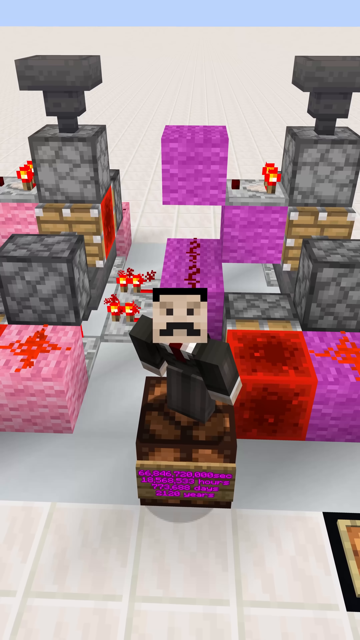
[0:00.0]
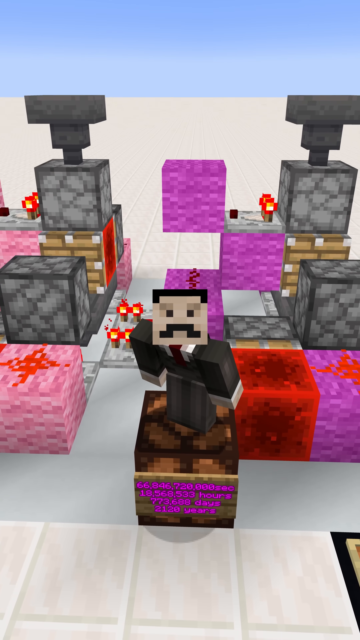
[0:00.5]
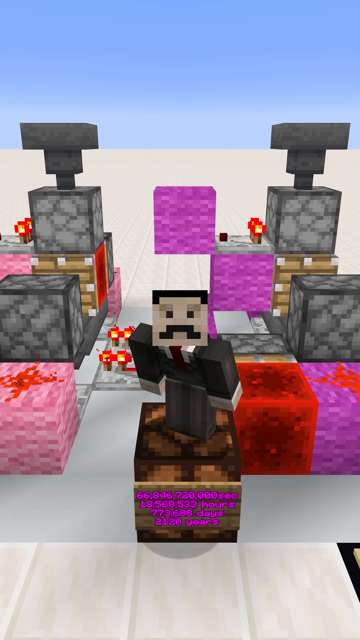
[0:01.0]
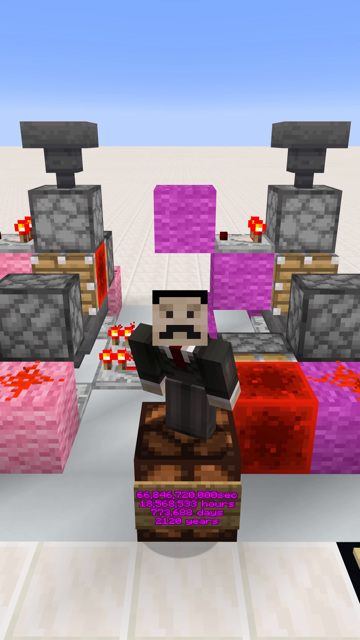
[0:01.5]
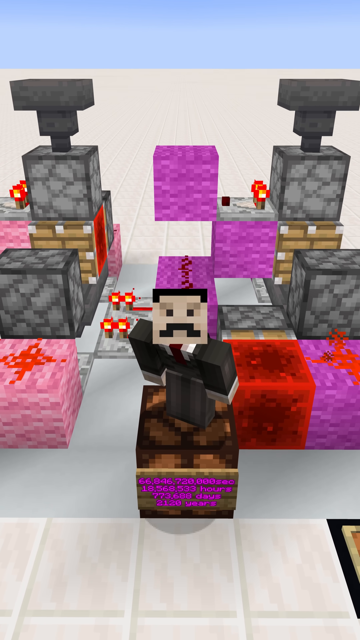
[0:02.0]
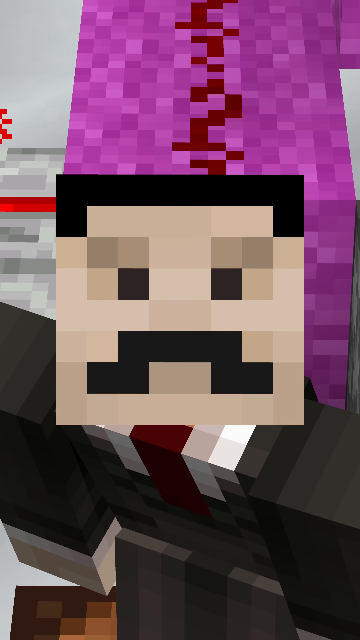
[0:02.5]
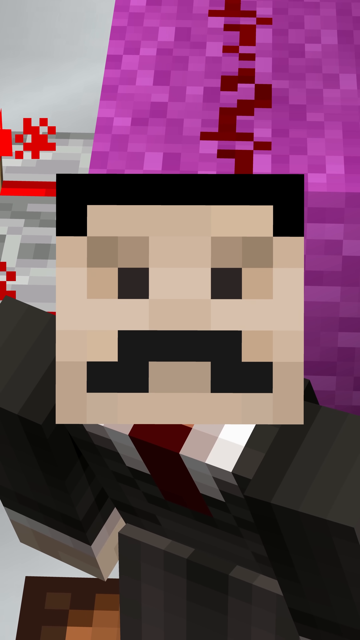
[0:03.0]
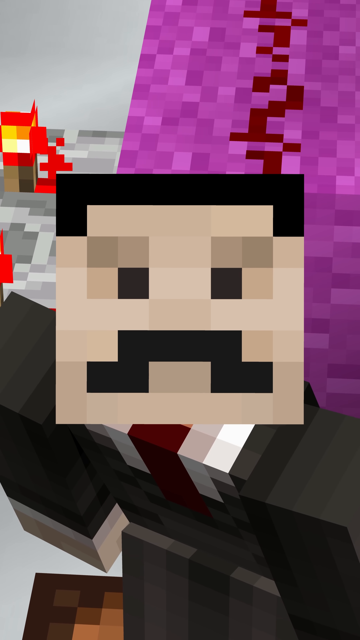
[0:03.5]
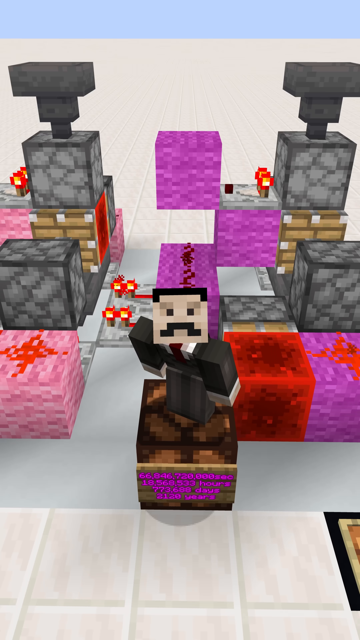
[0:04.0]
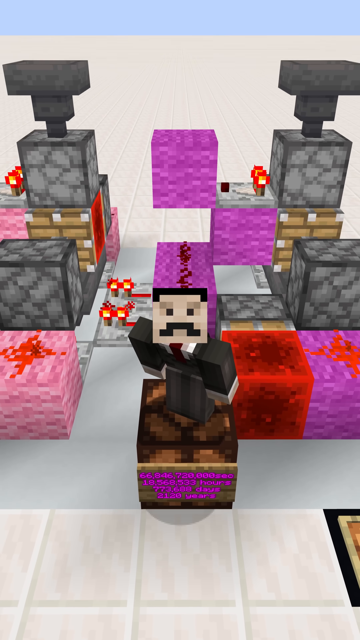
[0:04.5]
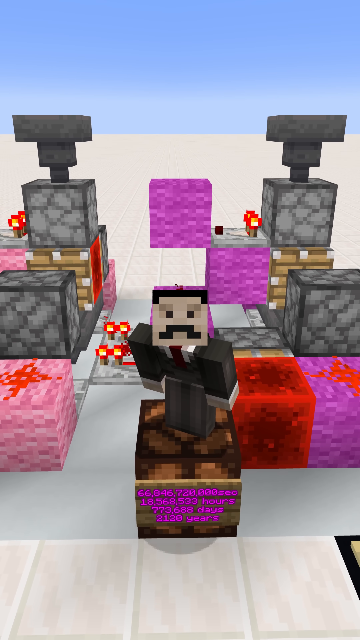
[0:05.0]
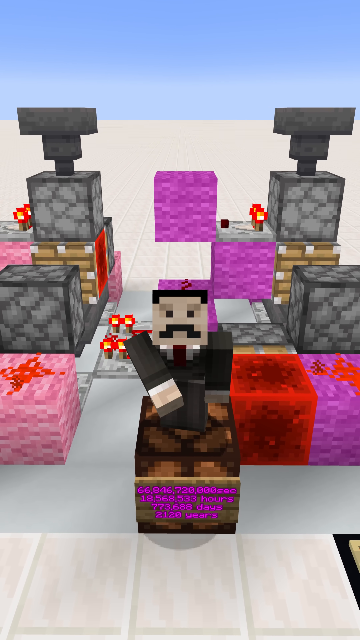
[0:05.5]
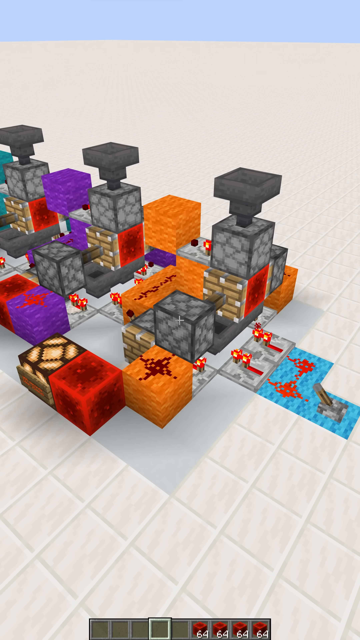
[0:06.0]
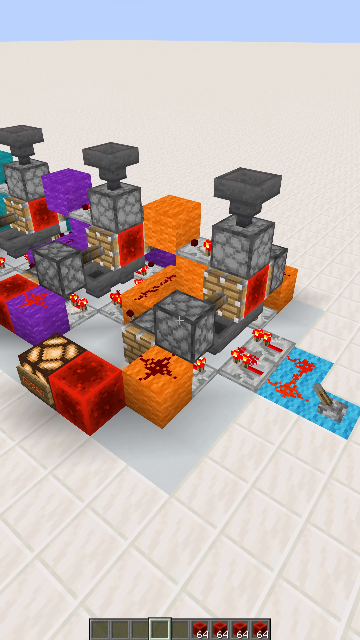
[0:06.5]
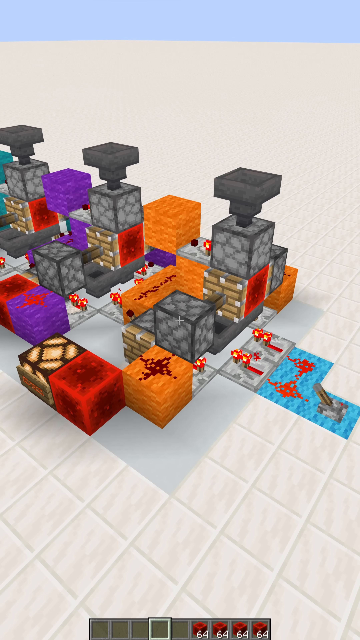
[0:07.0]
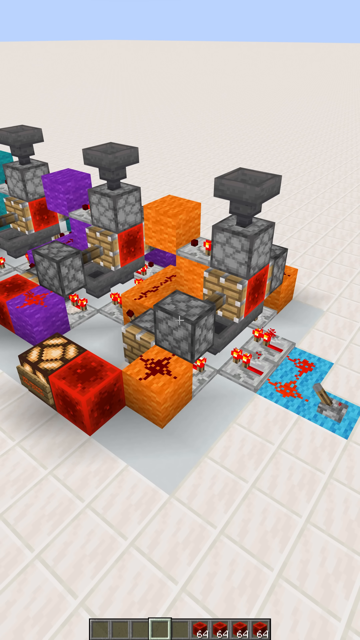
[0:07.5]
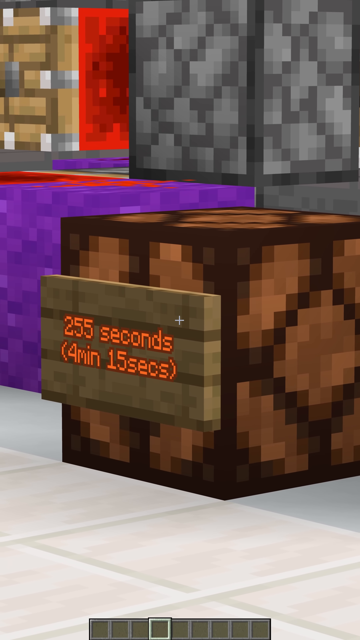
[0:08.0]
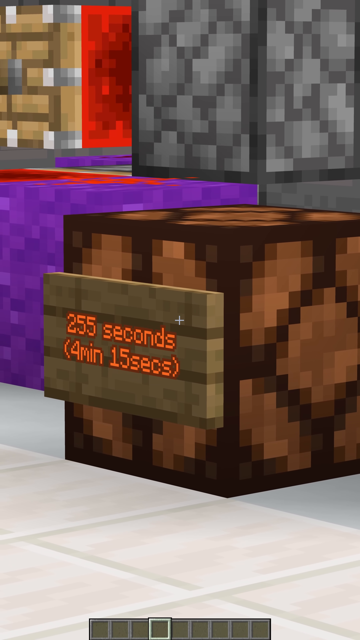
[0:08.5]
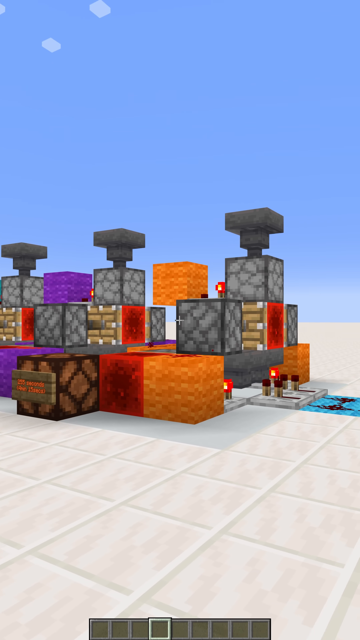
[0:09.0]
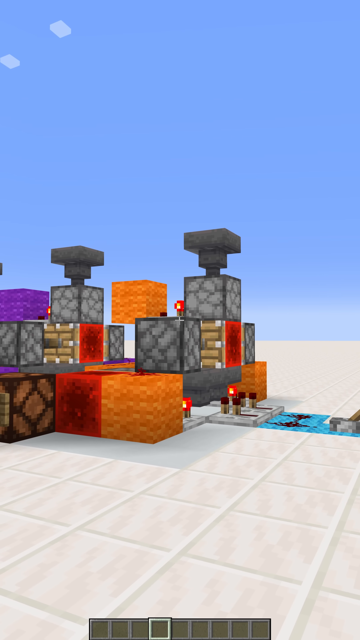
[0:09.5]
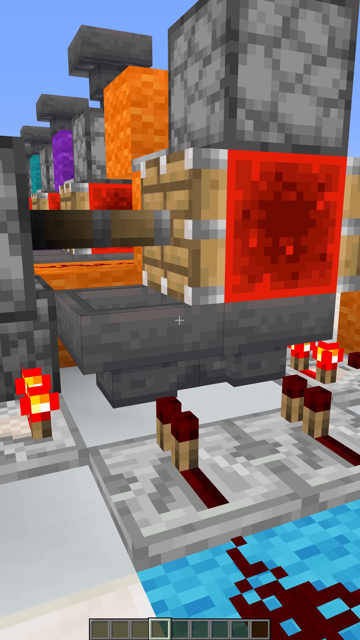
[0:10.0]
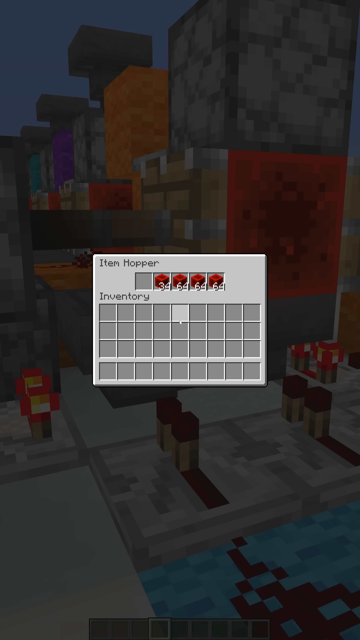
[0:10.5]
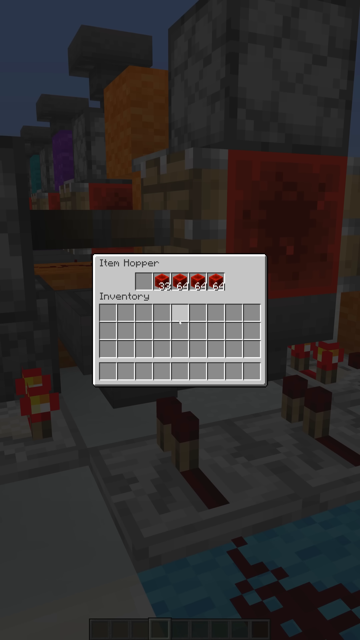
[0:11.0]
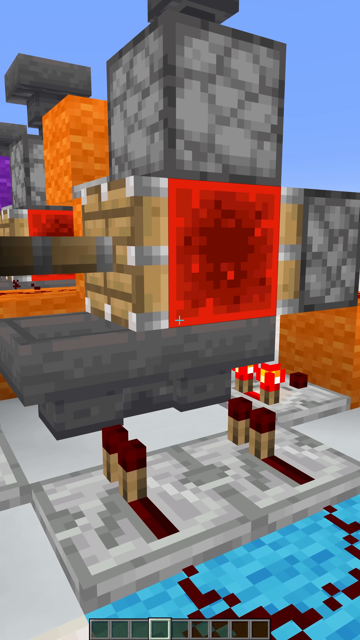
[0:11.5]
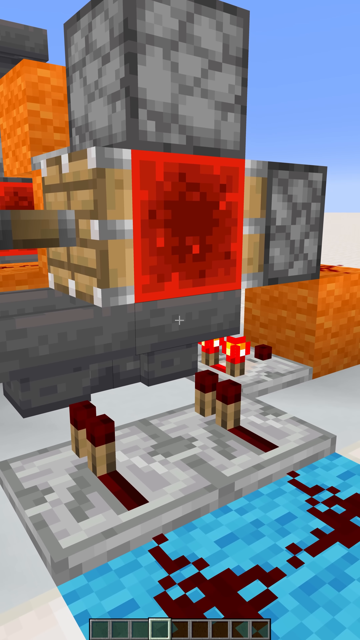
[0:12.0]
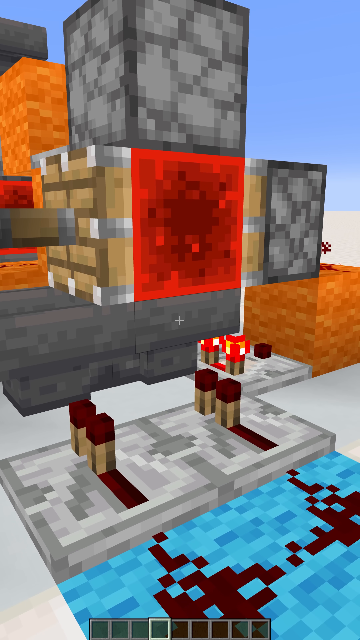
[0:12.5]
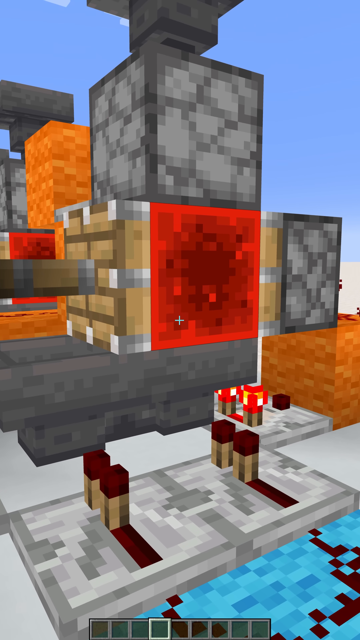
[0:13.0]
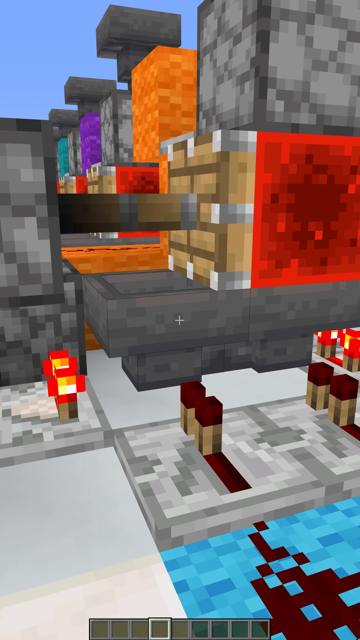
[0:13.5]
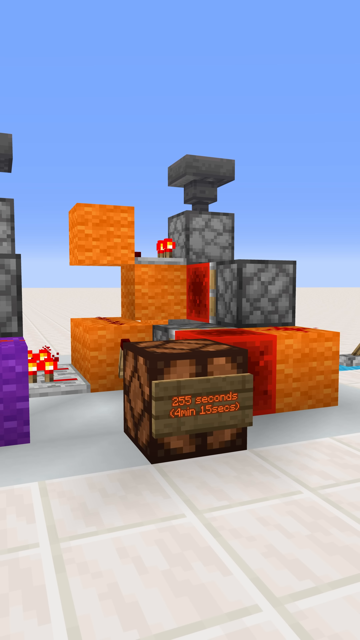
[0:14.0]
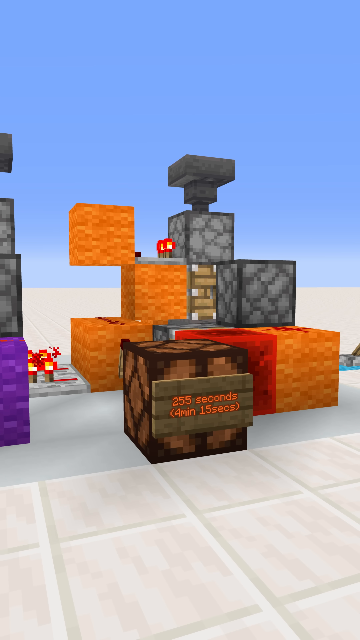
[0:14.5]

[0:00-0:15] In a video game, a pixelated character that looks like it is made of Lego blocks appears at the beginning, standing on a purple block. In the back there are also pink, purple and gray blocks. The character is male, with a mustache, wearing a grayish suit and a tie, and looks directly at the player in a very close-up shot. The scene then shoots to the right: the same blocks are still visible, but the character no longer is. Only the blocks show, orange, red, purple and gray, on a white tile floor. The view then pans from different places to show different angles of the same cubes. It does not look like a maze; at this point it is just blocks.